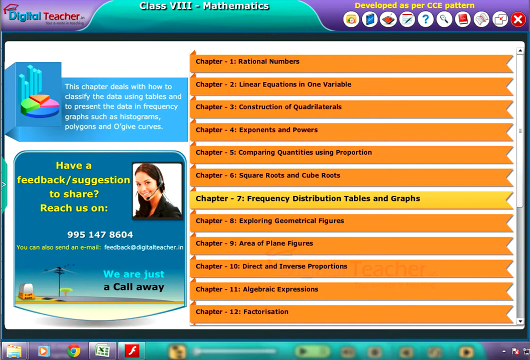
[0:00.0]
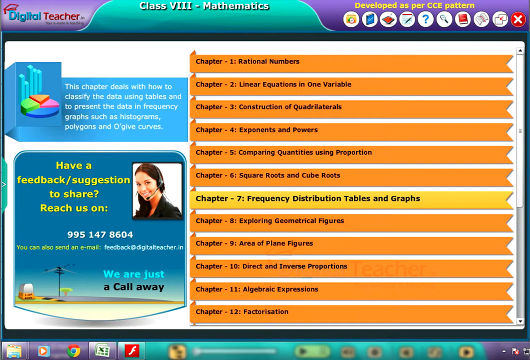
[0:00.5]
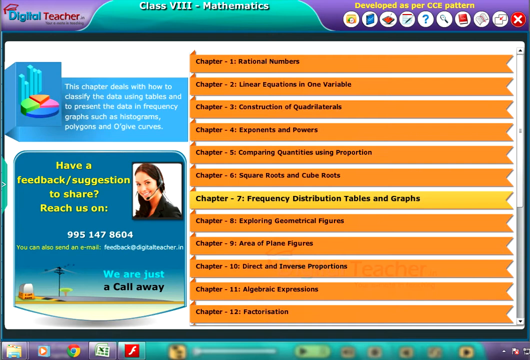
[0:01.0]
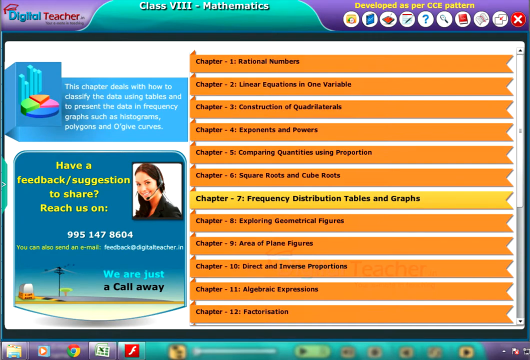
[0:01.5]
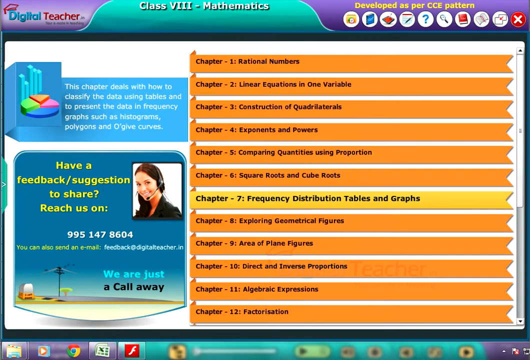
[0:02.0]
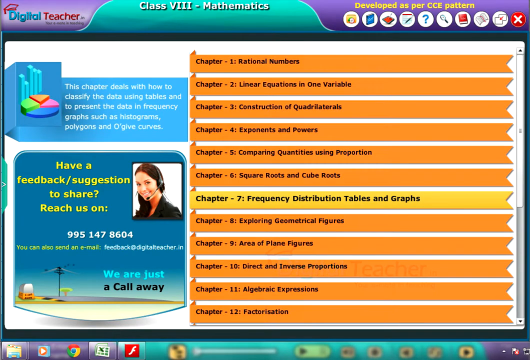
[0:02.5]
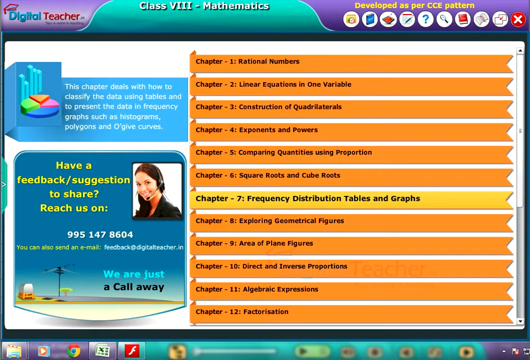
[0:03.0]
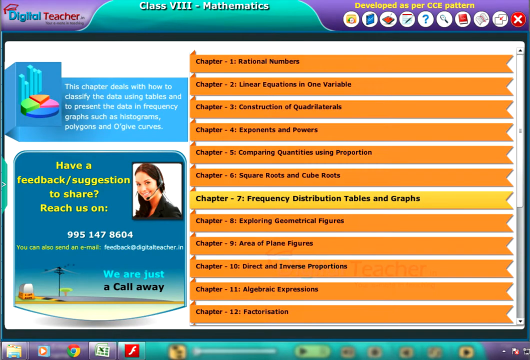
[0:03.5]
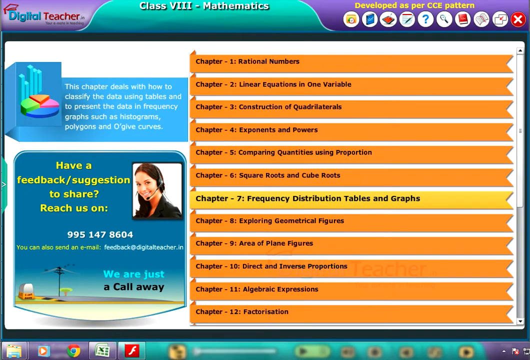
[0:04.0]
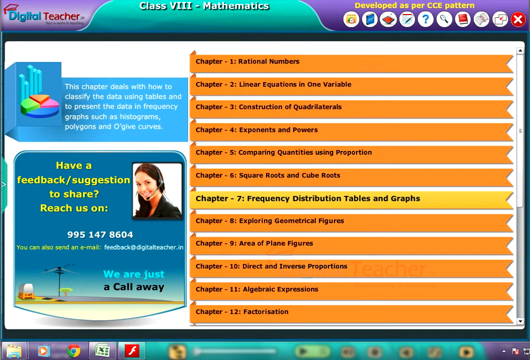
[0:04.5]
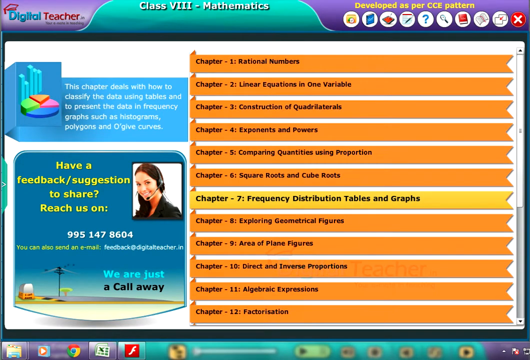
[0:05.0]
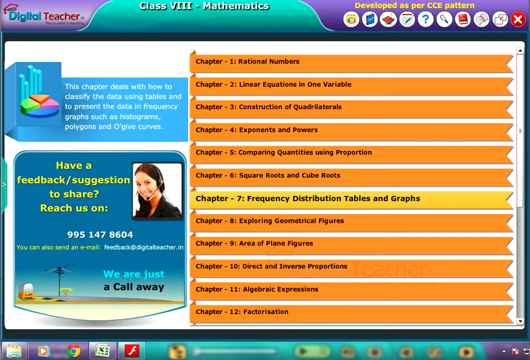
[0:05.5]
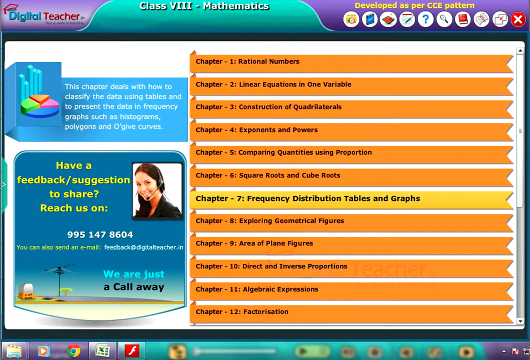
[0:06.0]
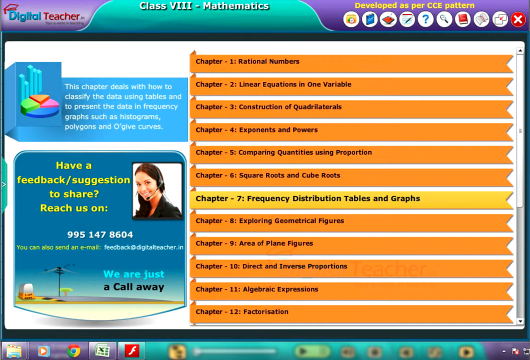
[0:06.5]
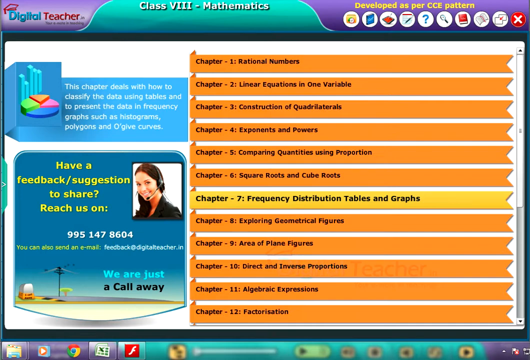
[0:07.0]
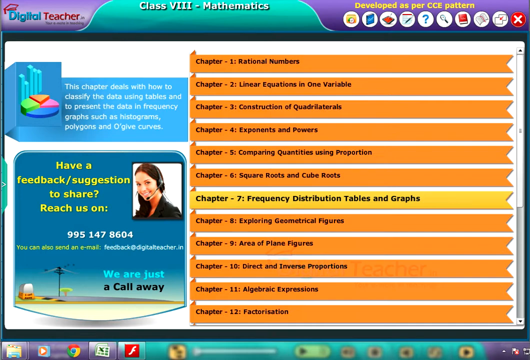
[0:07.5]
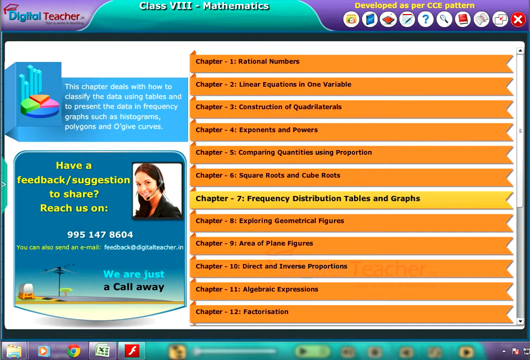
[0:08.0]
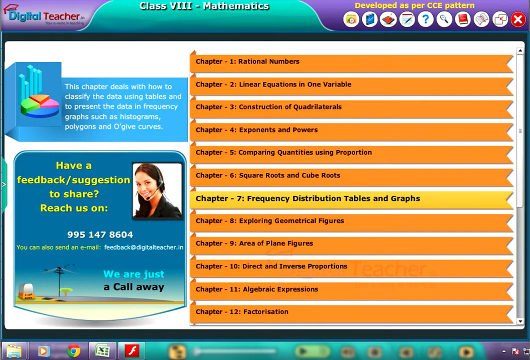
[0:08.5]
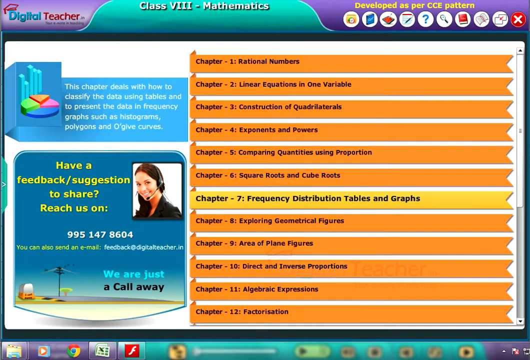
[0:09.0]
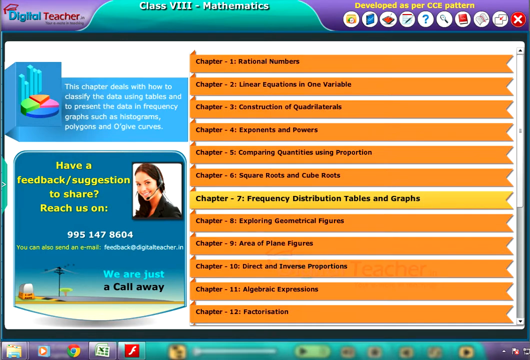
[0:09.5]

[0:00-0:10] A slide shows "digital teacher" in the top left against a purple background. Across the top of the screen is a teal shape, almost like a folder tab, reading "class VIII - mathematics" against the teal background. In the top right are a number of small circular icons that look like they can be clicked as part of the learning process. On the right-center side of the screen, the chapters are listed in orange, each chapter in a long orange rectangle; 12 chapters are shown, and chapter seven is highlighted in yellow. On the left side there is a small pie chart and a brief summary of the chapter on a blue background. Beneath that is a small help square that says "have feedback / suggestions to share, reach us on", followed by a phone number and a picture of an operator wearing a headset, with the text "we are just a call away".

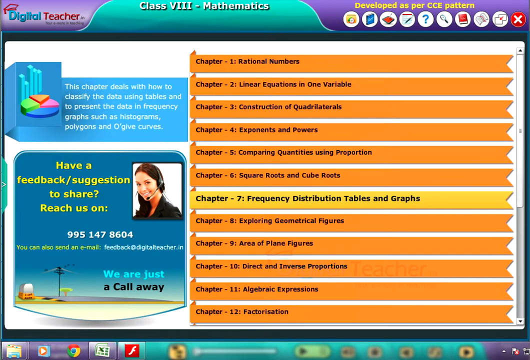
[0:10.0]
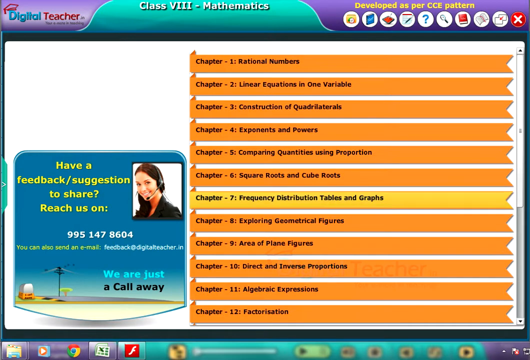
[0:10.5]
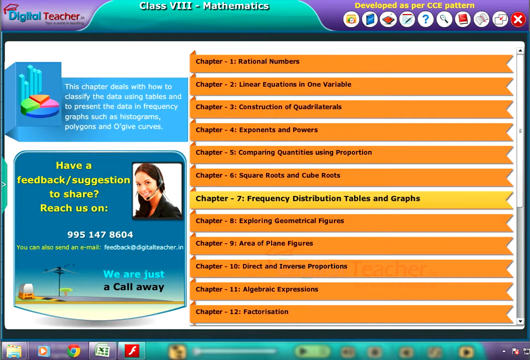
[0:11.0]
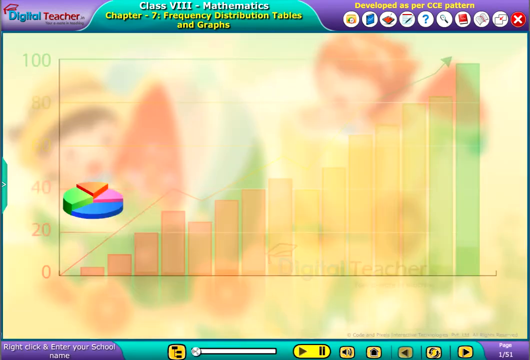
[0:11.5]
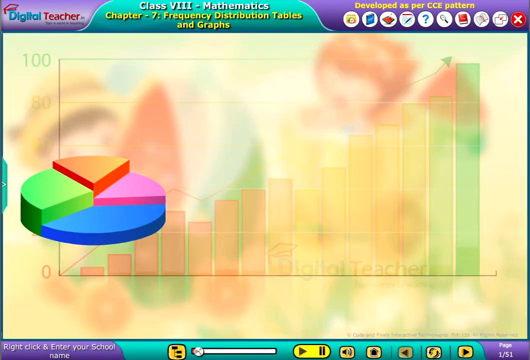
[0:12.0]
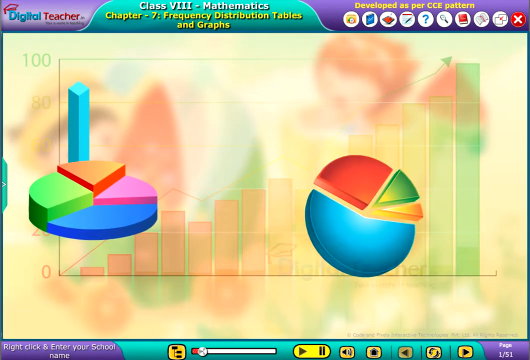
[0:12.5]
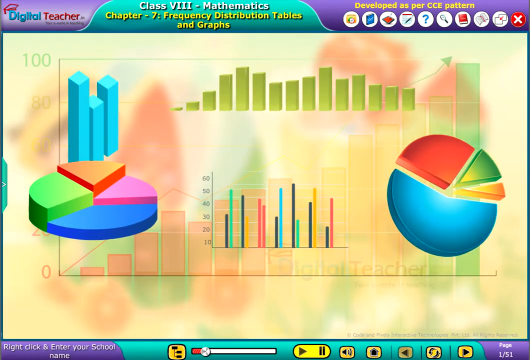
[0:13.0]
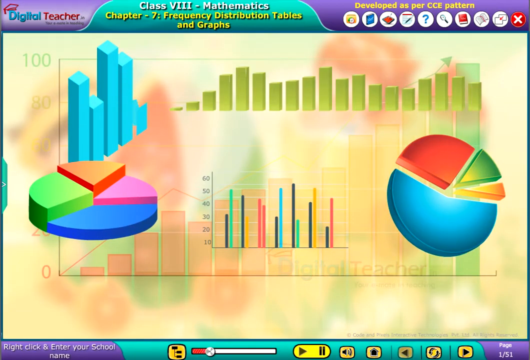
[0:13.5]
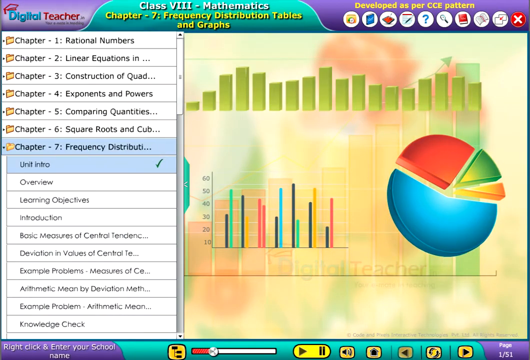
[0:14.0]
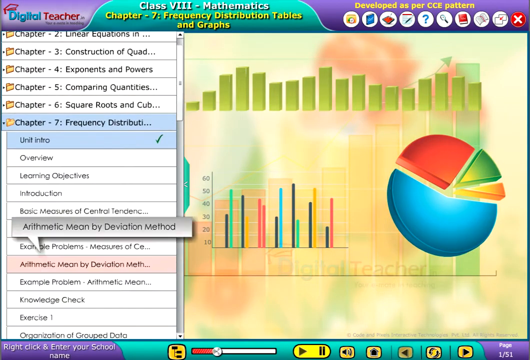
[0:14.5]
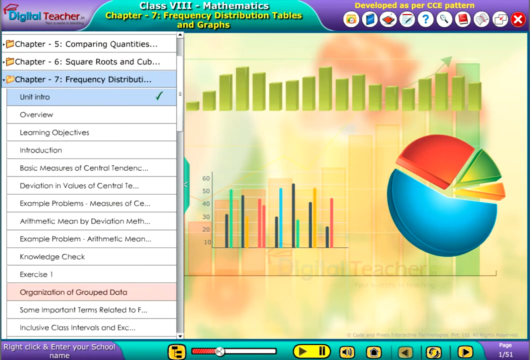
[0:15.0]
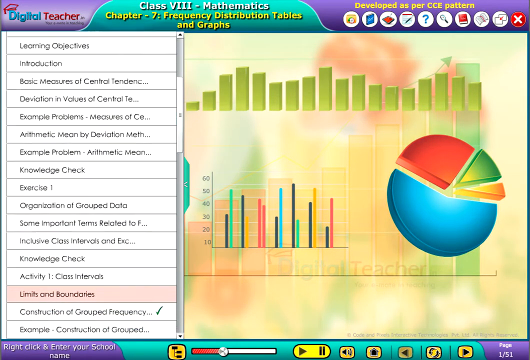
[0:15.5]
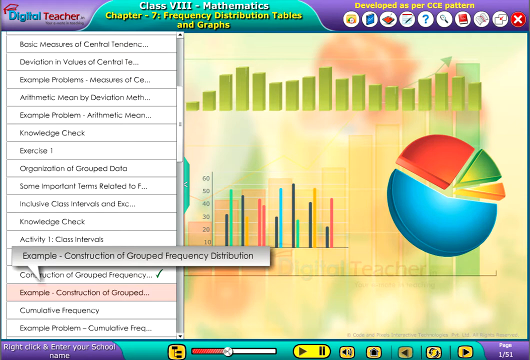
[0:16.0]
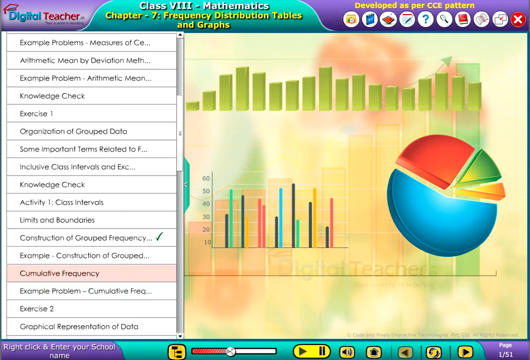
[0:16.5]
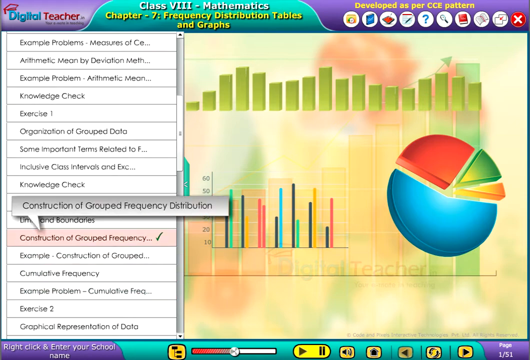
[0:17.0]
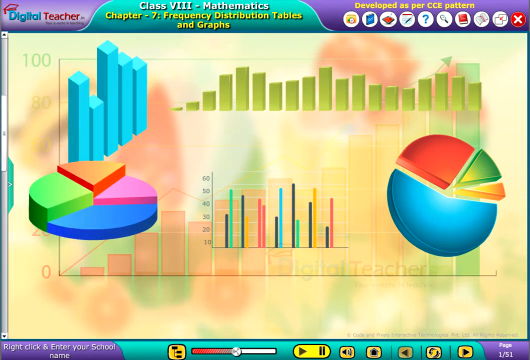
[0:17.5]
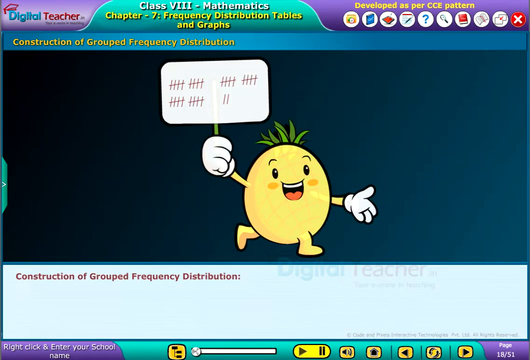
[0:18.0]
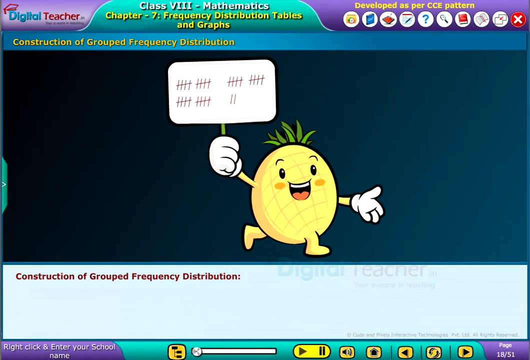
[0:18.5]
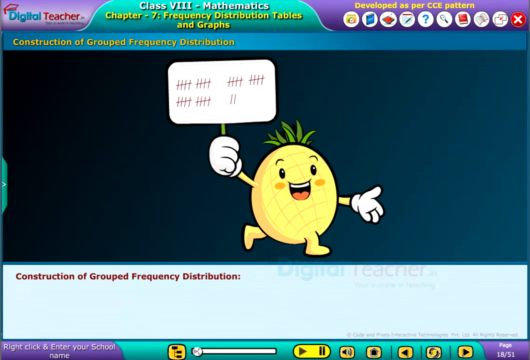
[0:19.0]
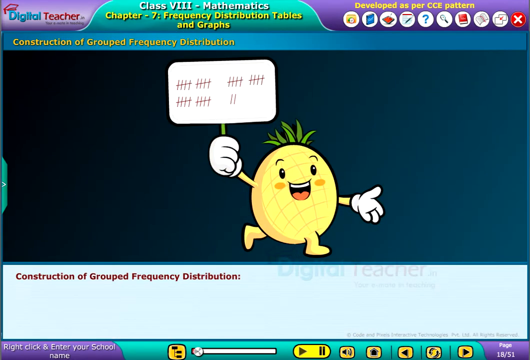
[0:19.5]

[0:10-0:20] The slide shows the words "digital teacher" in the top left, a number of chapters listed, a support option, and circular icons in the top right. The chapters, 1 through 12, are listed in long orange rectangles on the right-hand side. Graphs and chart graphics quickly appear on the screen, and then folders for each chapter appear on the left-hand side; chapter 7 is highlighted and opened, showing its contents. The view quickly scrolls down through the different contents, with the selected item highlighted in a soft pinkish hue, moving quickly from one to the next. This portion then closes, and different charts and graphs are shown on the full screen. Next, a small, digital, cartoonish-looking pineapple appears holding a little scoreboard with tallies in his hand, and beneath him is the title "construction of grouped frequency distribution" written in red.